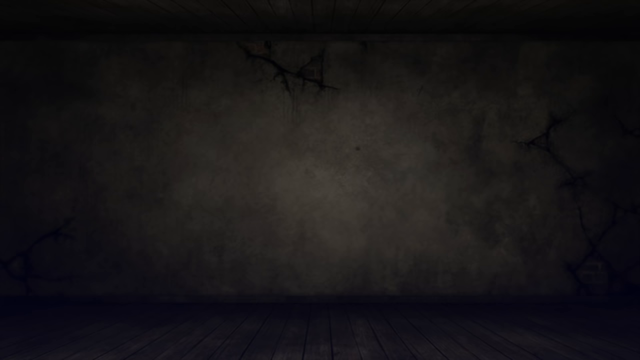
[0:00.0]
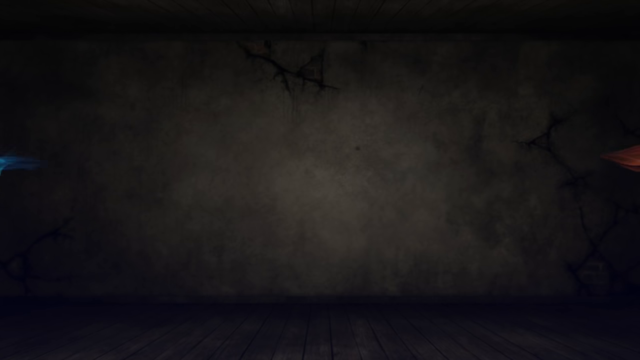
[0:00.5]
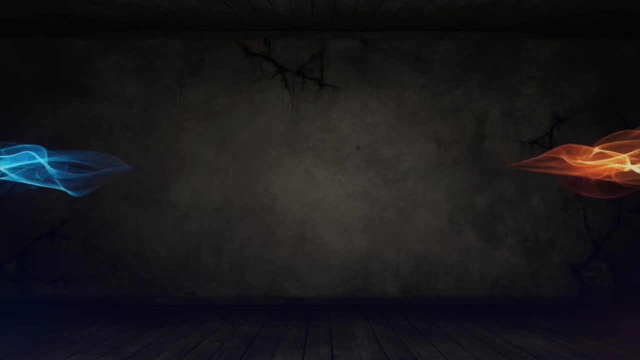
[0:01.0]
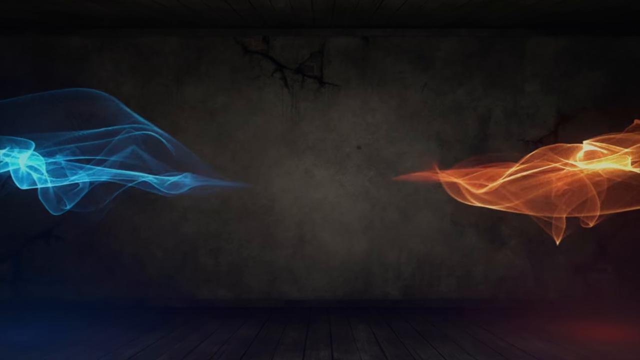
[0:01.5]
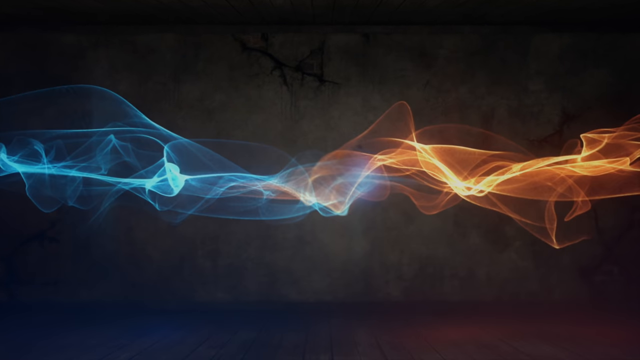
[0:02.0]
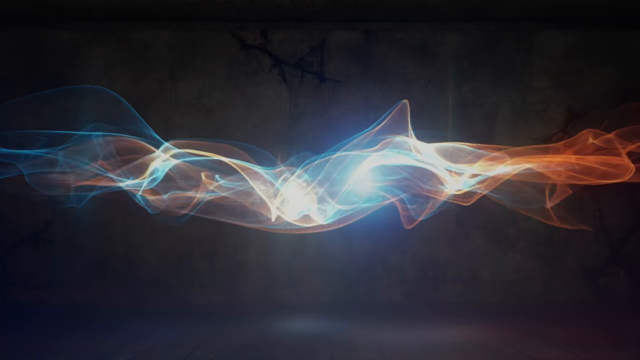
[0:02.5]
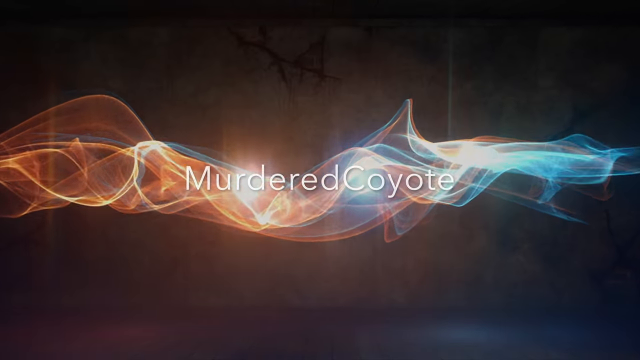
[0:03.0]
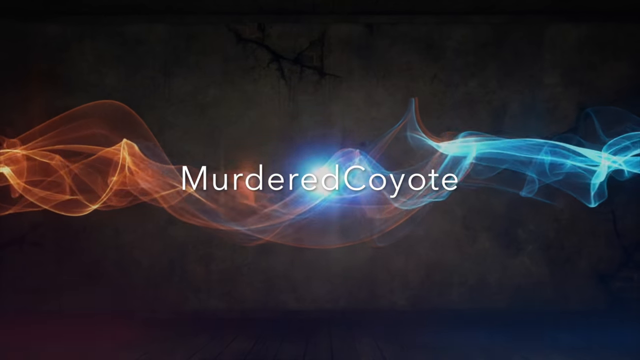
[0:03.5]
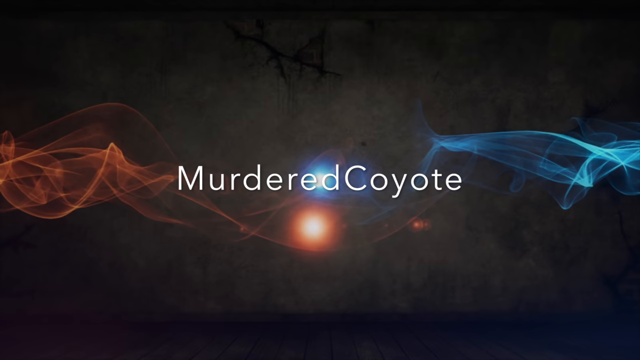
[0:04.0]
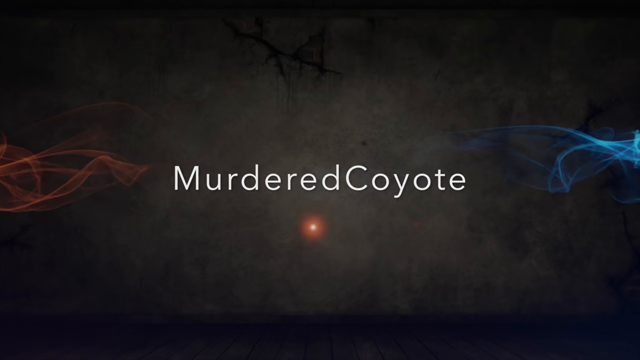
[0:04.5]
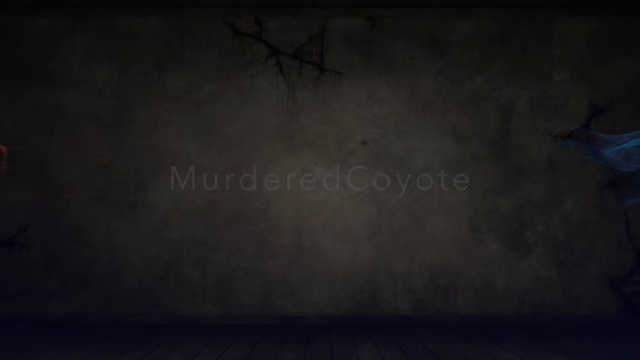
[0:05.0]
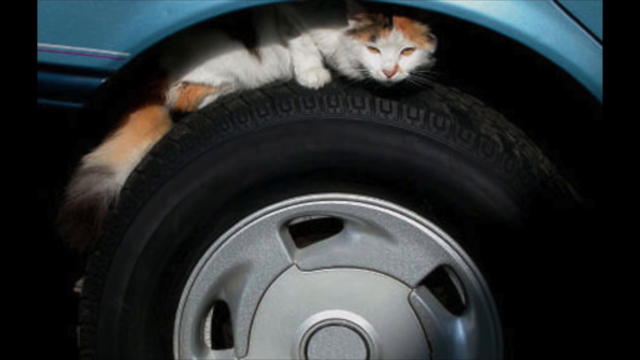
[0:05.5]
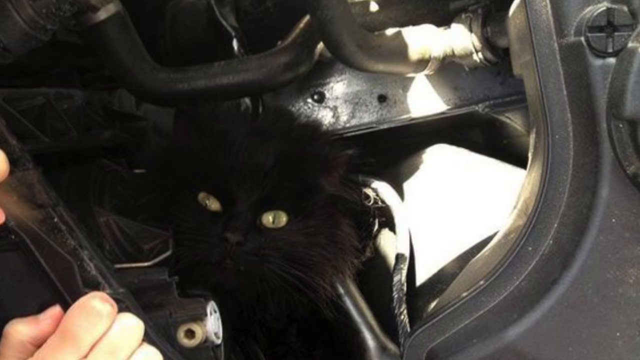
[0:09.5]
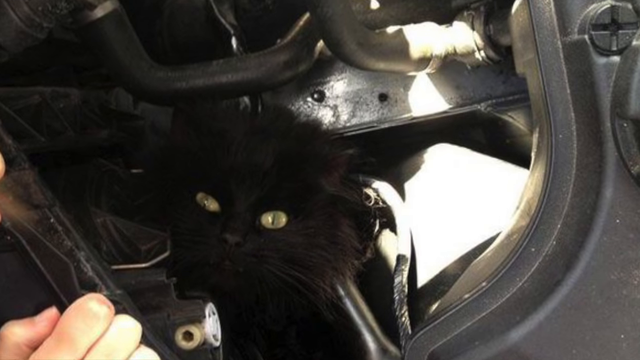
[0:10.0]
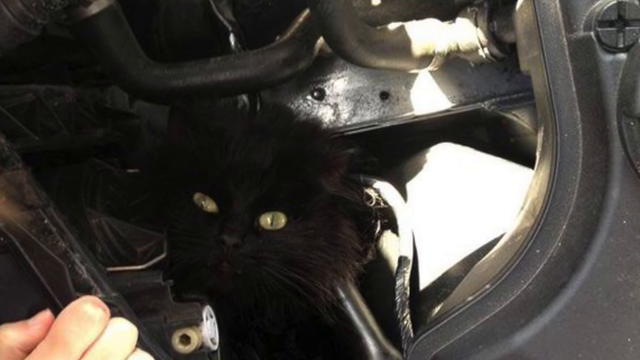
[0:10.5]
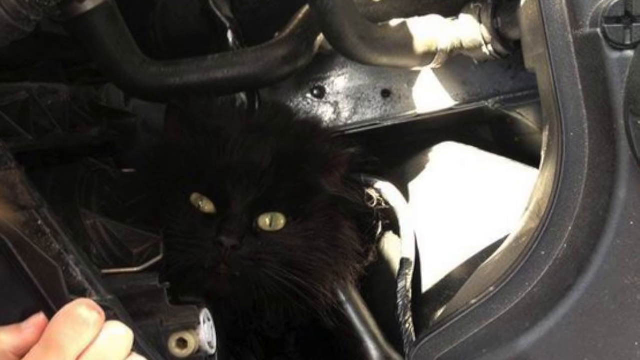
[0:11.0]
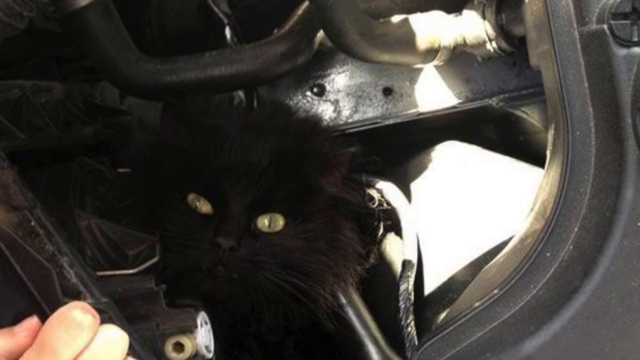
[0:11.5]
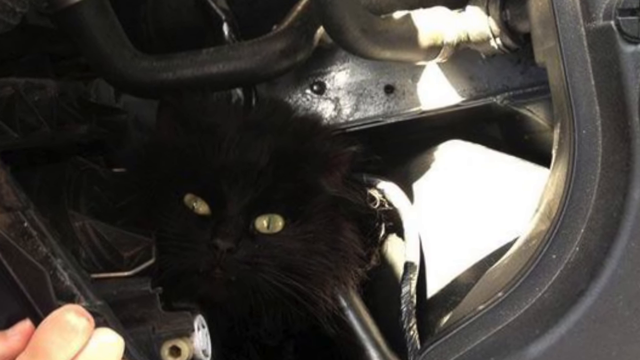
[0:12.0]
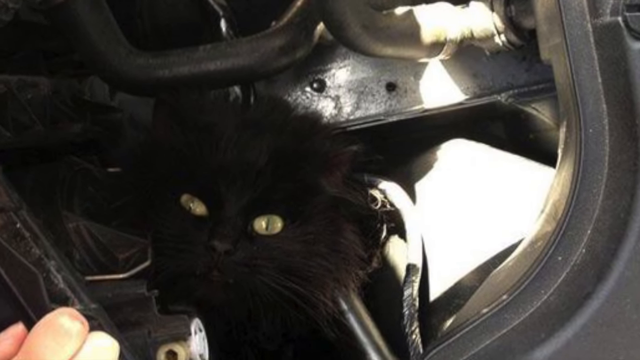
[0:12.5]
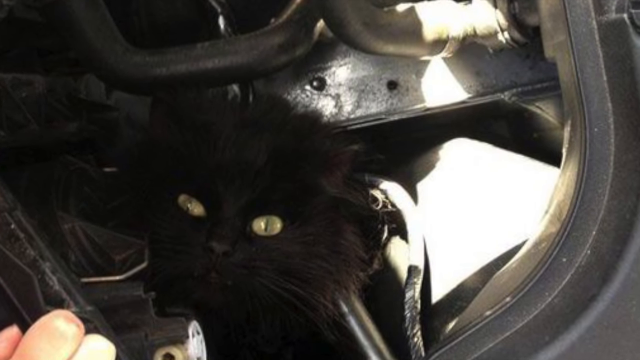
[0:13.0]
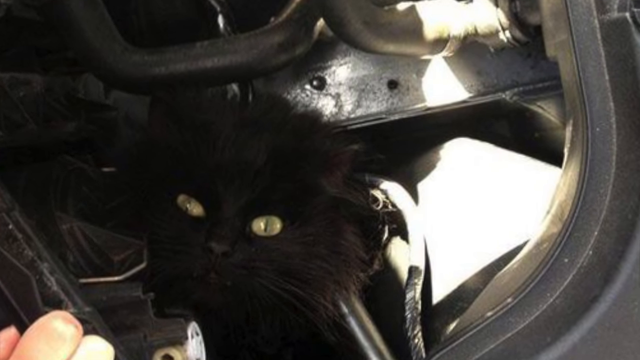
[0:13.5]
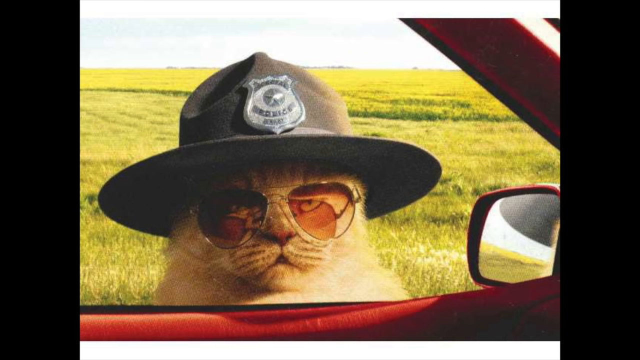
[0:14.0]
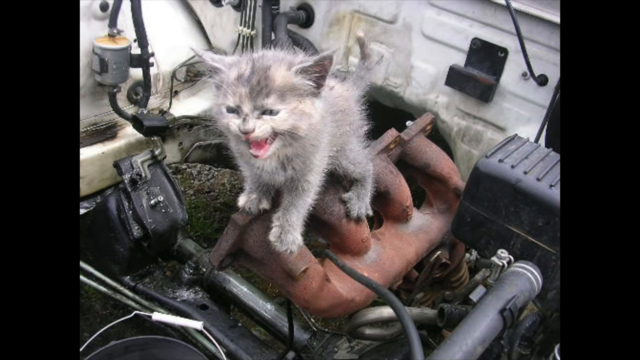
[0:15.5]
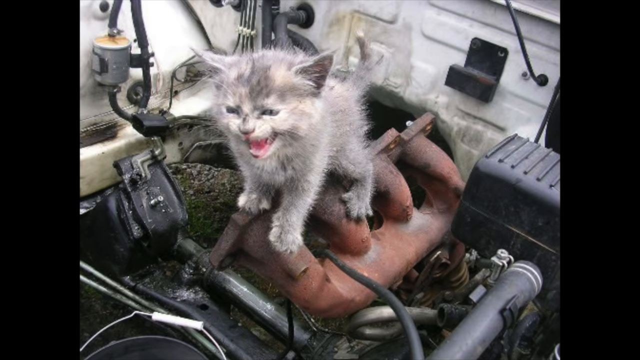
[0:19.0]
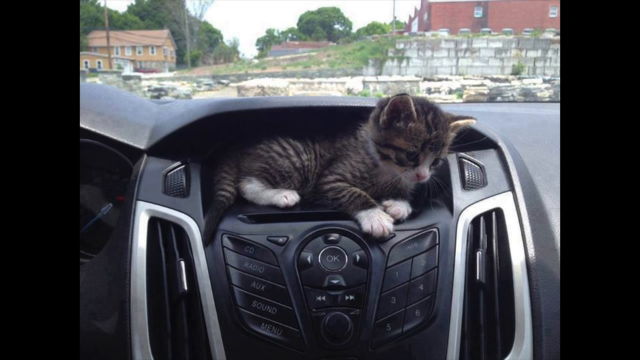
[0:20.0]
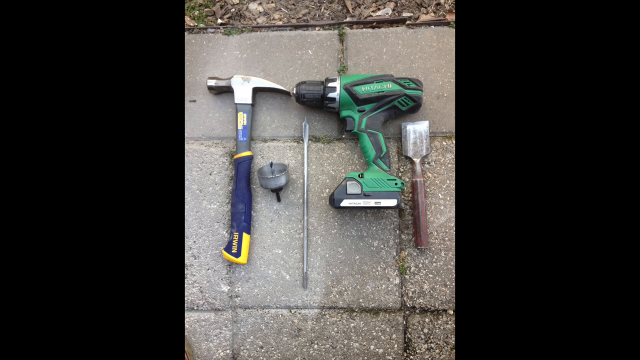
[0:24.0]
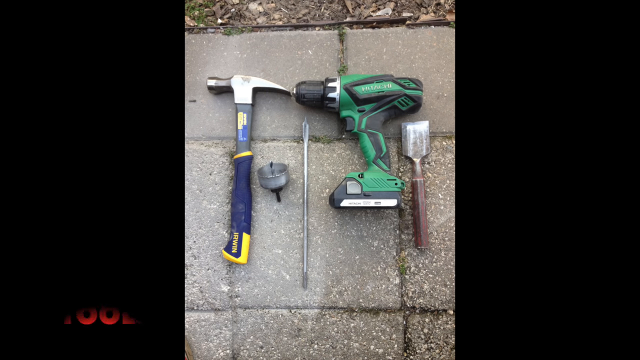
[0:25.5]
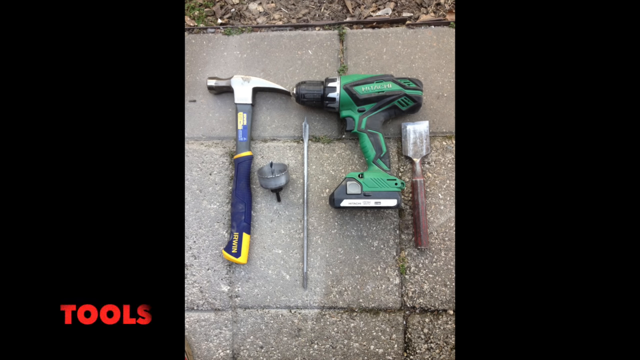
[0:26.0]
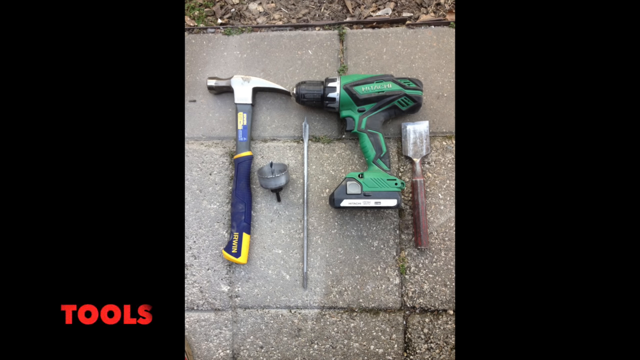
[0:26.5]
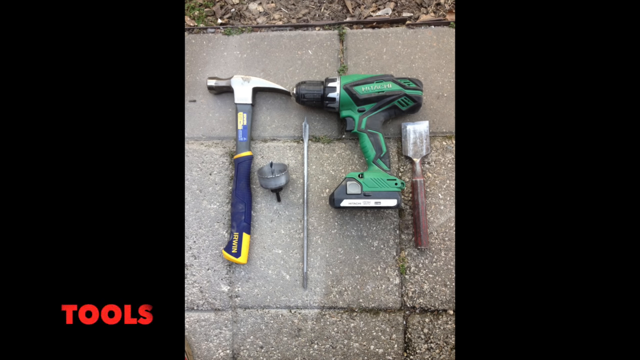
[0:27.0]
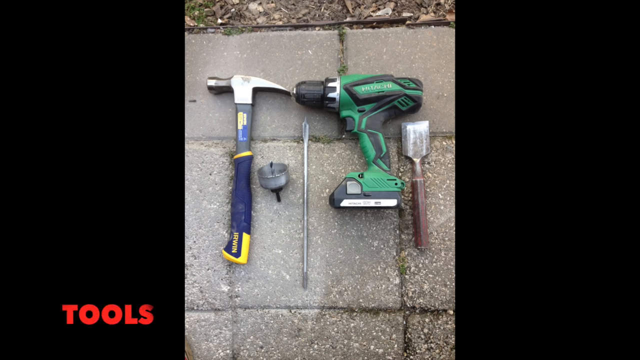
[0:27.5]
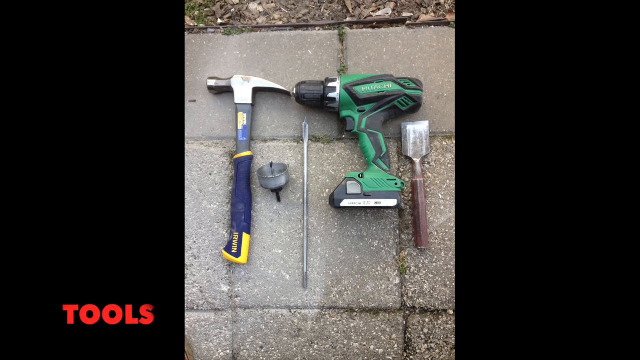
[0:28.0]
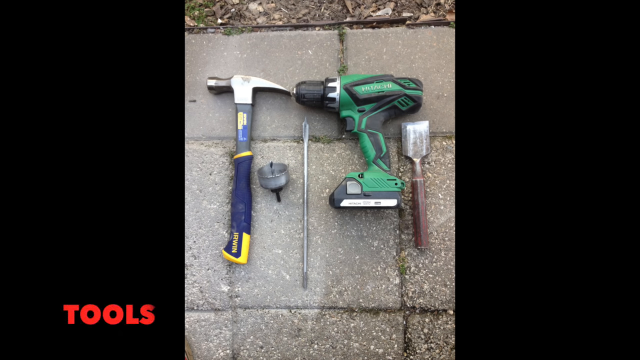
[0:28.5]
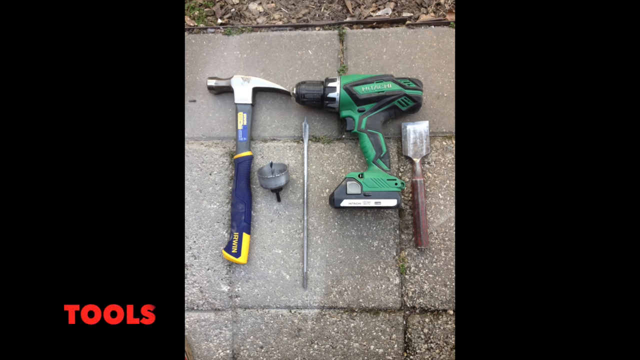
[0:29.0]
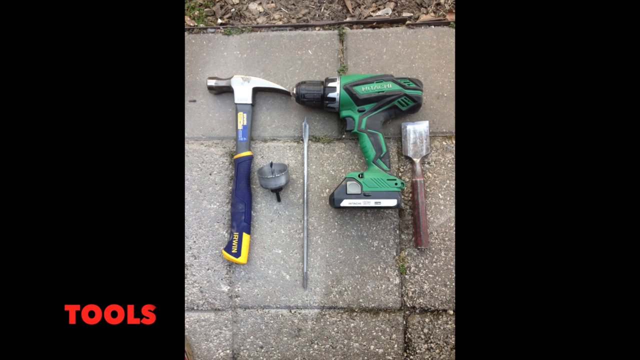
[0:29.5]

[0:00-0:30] On a black screen, two light waves in iridescent colors come together, and the text reads "murdered coyote". Where they meet in the middle they produce a white light, which is behind the "ed" in the word "murdered". The waves fade away and a calico cat appears, resting on a black tire in a wheel well. Another cat, solid black with green eyes, is inside the actual wheel well of the tire, with part of the well visible; either a light is shining on it or sunshine is coming through. The black cat stays there. Another cat wears glasses and a cowboy hat. Another cat is crying and appears to be on a piece of equipment, possibly the engine of a car. Another cat is in the front console of a car. Then a drill bit, a hammer and some screws are lying on a sidewalk.